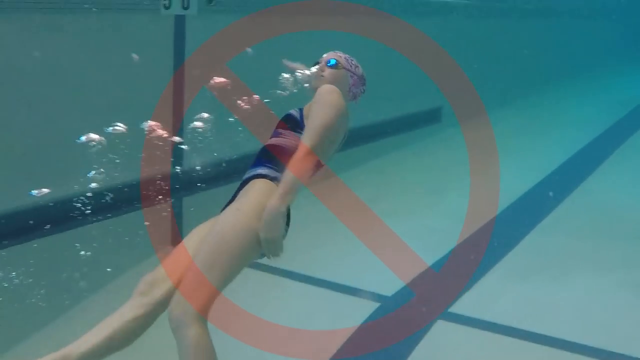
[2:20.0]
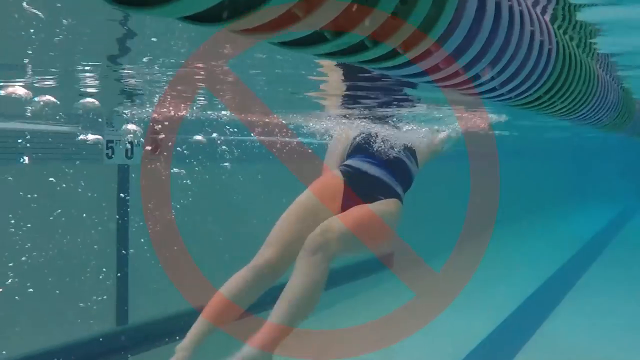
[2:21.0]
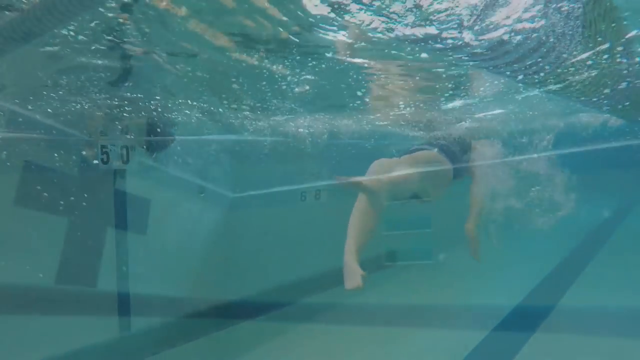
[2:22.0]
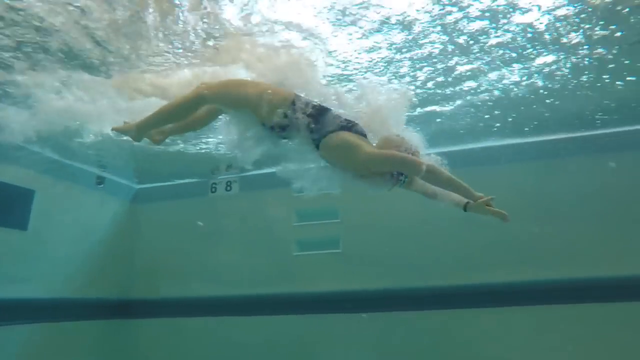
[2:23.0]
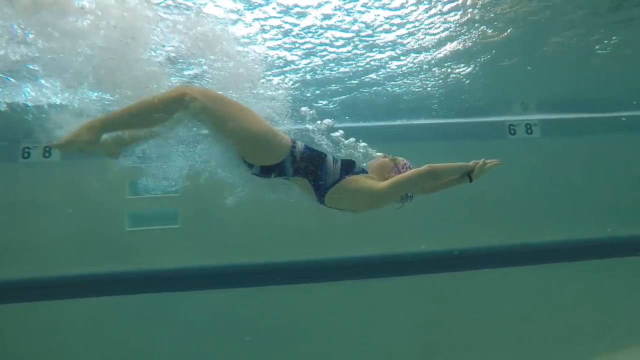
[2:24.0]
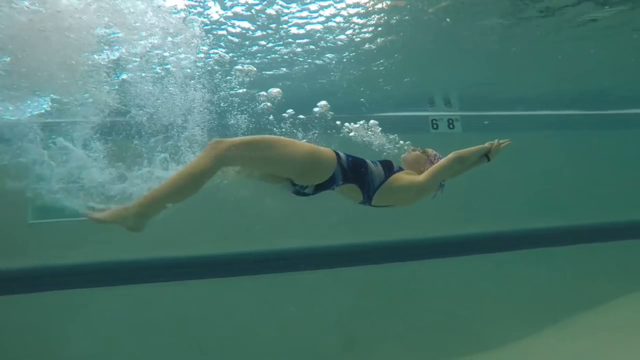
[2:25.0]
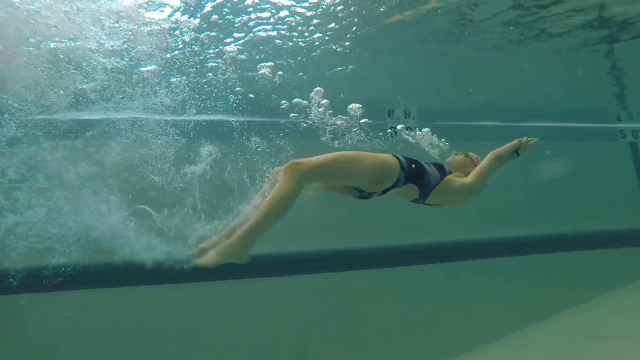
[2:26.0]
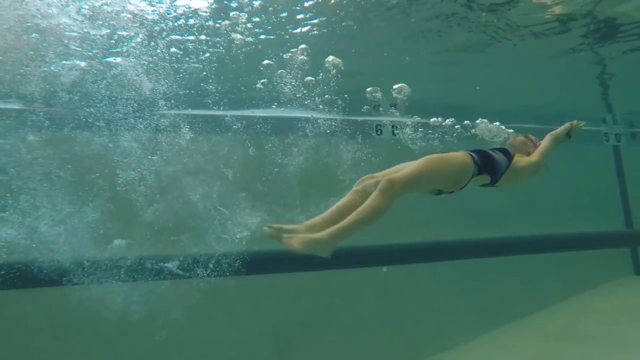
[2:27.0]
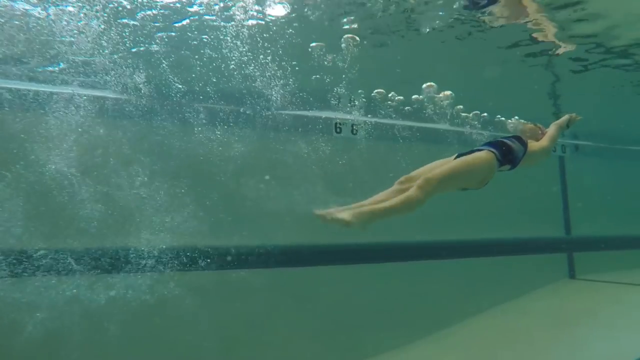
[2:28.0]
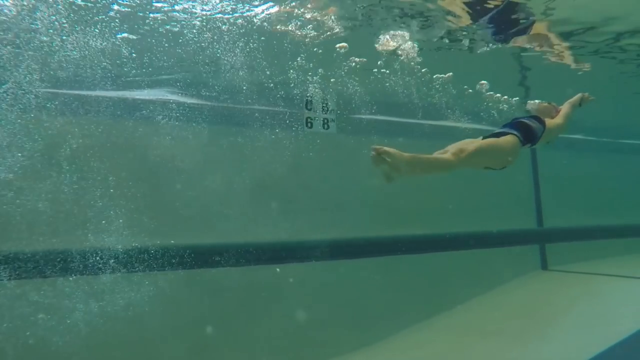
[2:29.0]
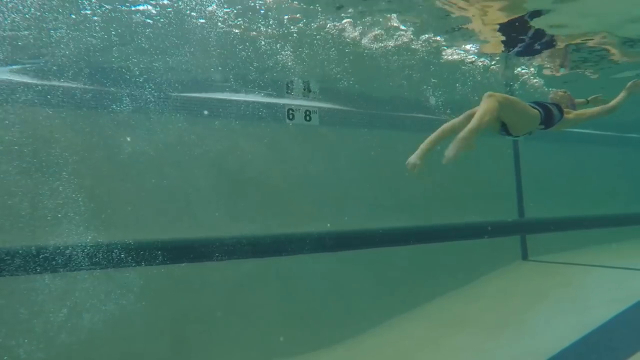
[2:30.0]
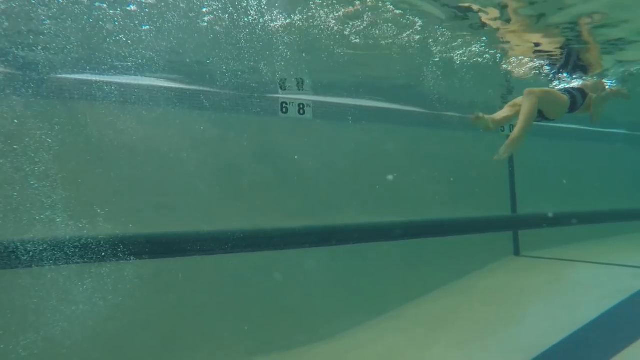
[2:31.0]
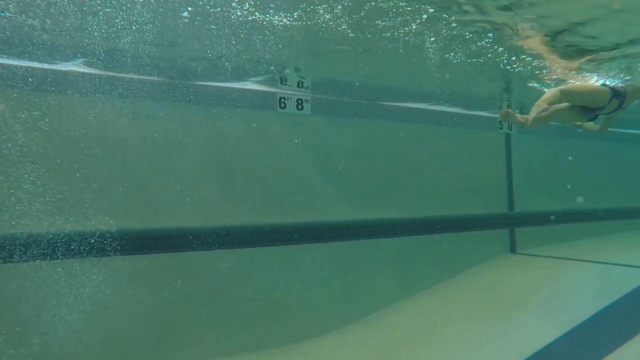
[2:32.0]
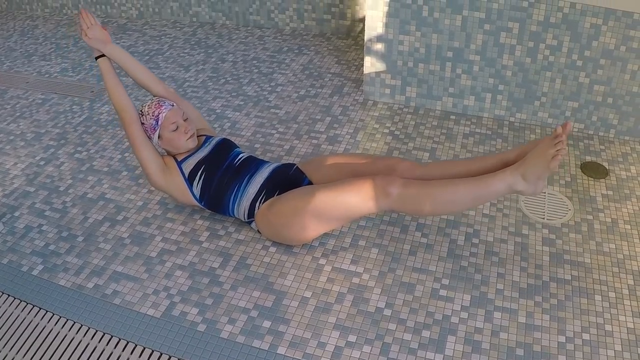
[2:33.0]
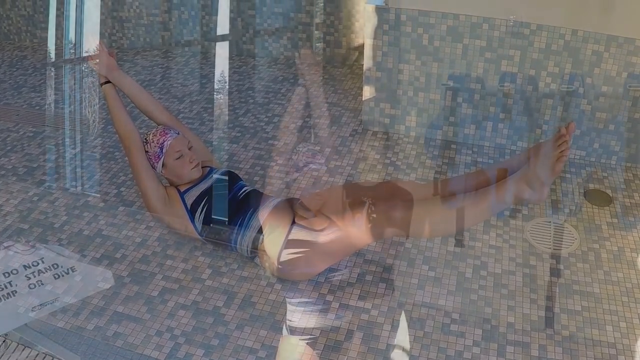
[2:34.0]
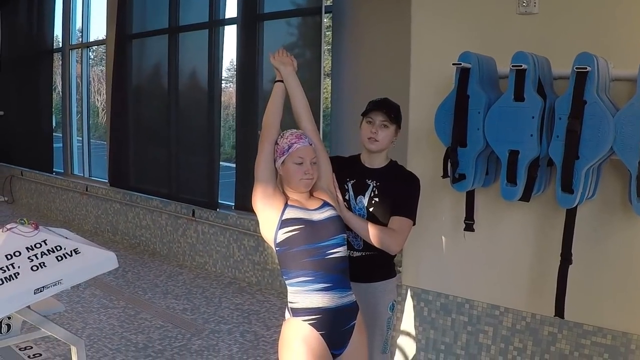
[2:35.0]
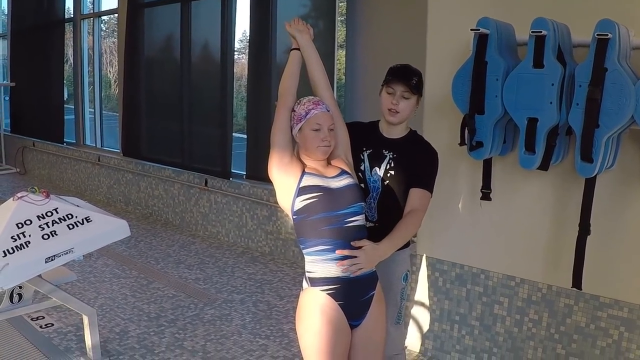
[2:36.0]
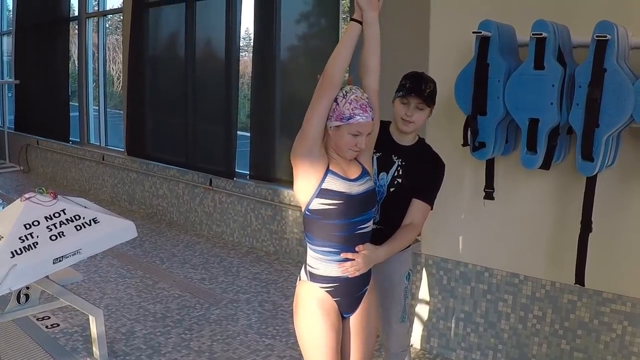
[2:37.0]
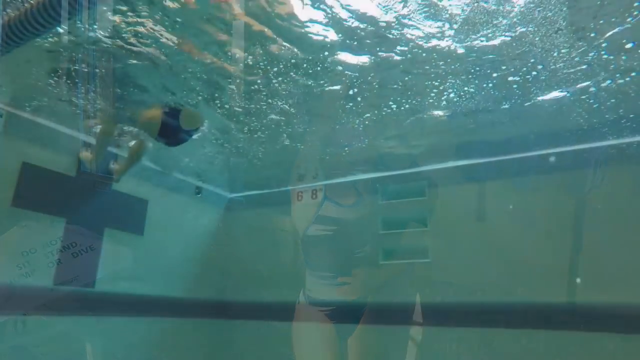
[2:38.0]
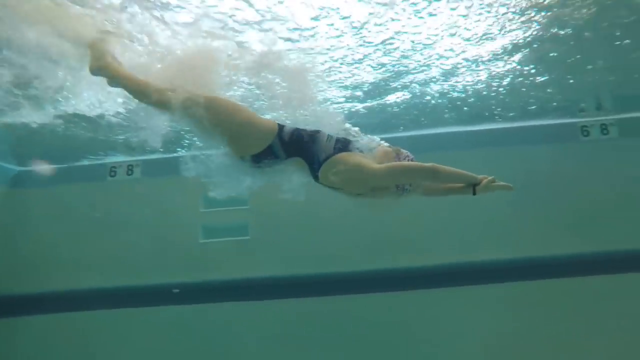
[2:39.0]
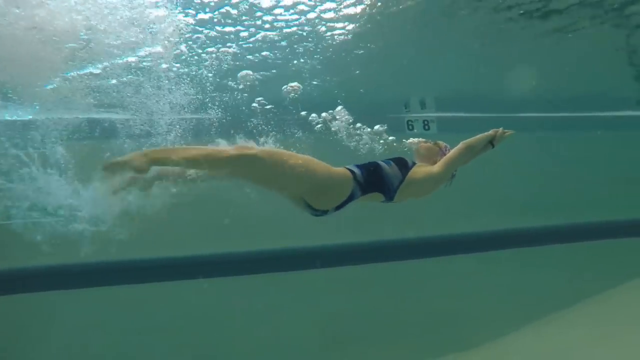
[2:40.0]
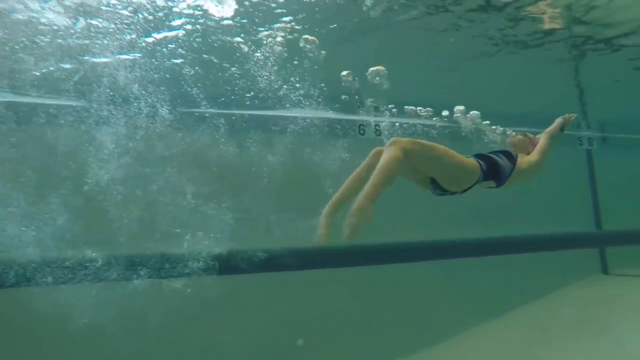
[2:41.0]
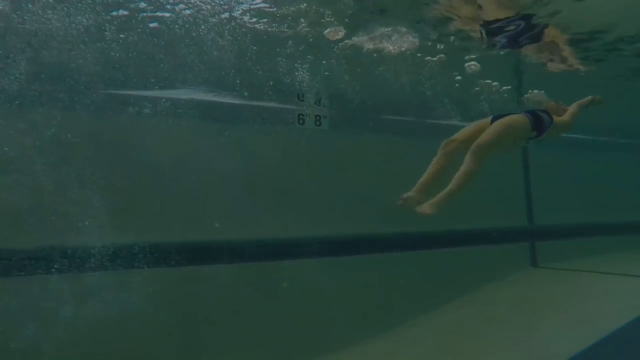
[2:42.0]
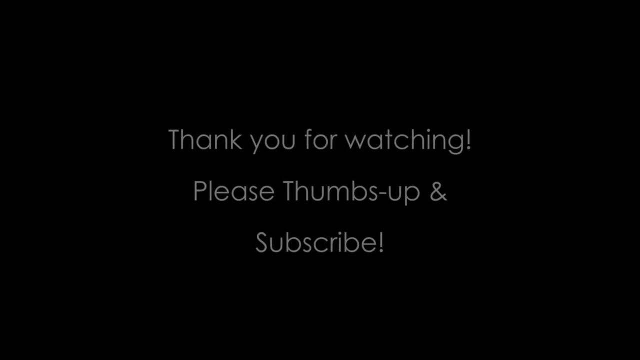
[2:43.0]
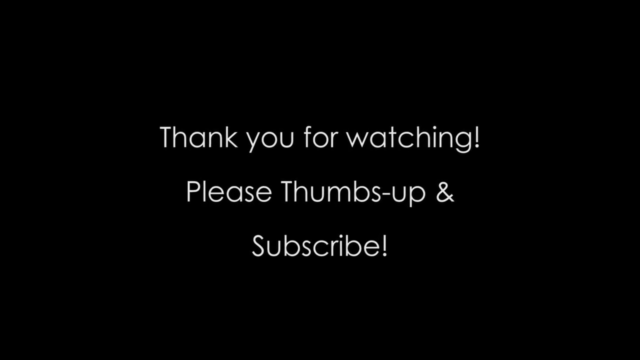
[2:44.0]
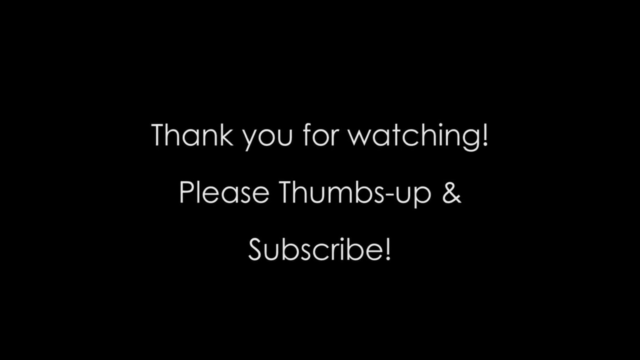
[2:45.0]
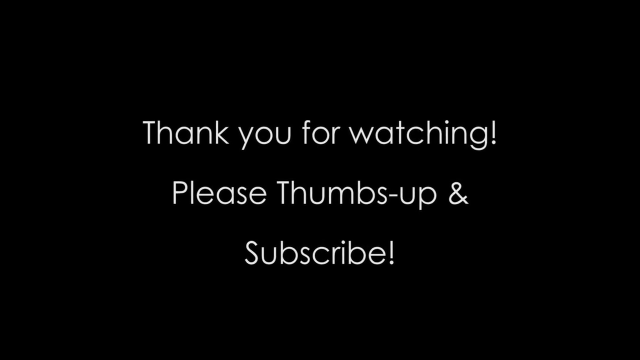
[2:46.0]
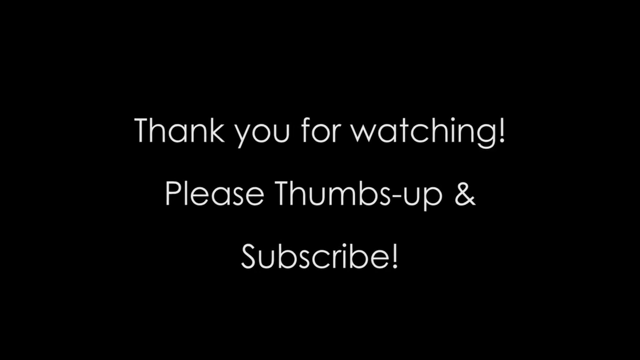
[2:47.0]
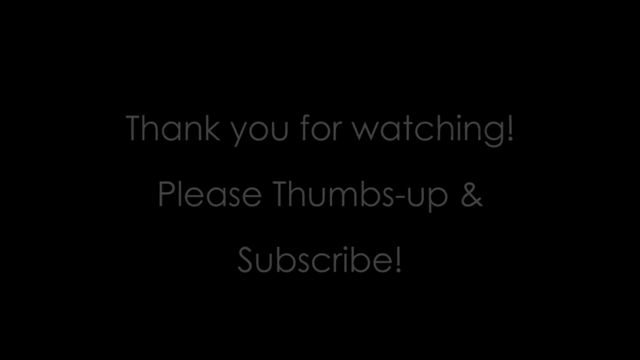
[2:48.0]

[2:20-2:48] The swimmer enters the pool with good form. She dives backward with her legs and arms initially straight in a pencil-like form until her body is fully submerged, then begins to crunch her abdomen. Her arms point further up toward the surface, her thighs are pressed together with her calves and toes pointed straight, and she begins kicking like a mermaid as her body angles upward toward the surface. Bubbles come out of her mouth and nose toward the surface. Earlier scenes of the swimmer outside the pool are then replayed: she lies on the floor showing good form with her legs and arms outstretched in either direction, then slowly arches her back and legs into a U shape. The video cuts to the swimmer standing upright with the trainer holding her lower back and midsection as she leans slightly backward and then slightly forward in a U shape. Finally the swimmer enters the pool again with good form, shown at full speed and in full motion to demonstrate how the dive is supposed to be performed.